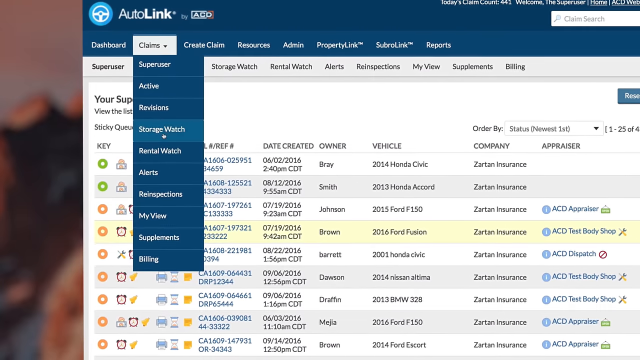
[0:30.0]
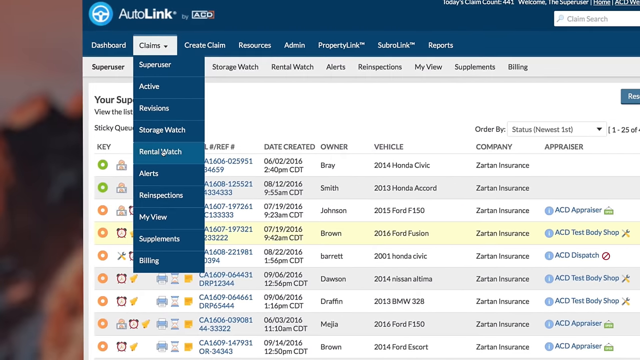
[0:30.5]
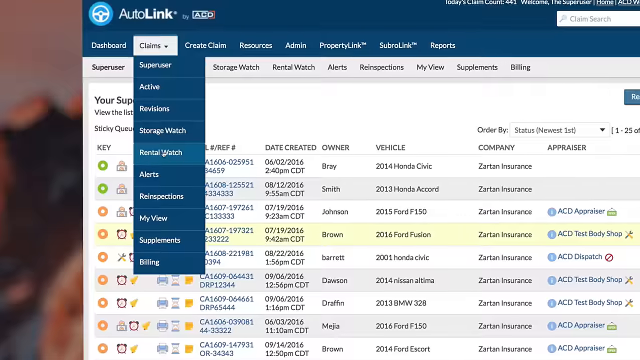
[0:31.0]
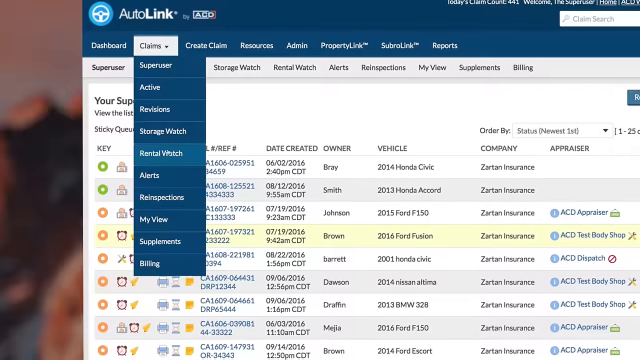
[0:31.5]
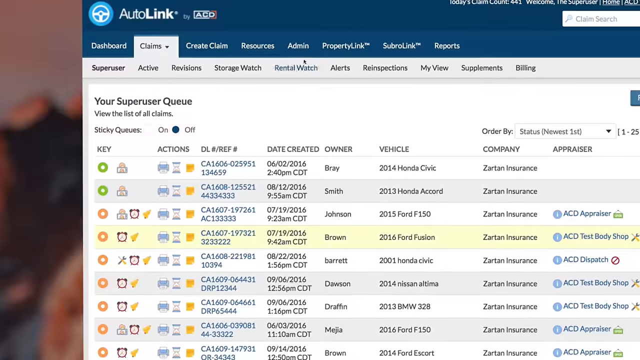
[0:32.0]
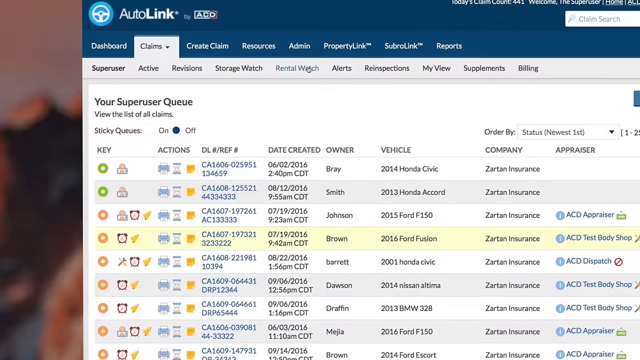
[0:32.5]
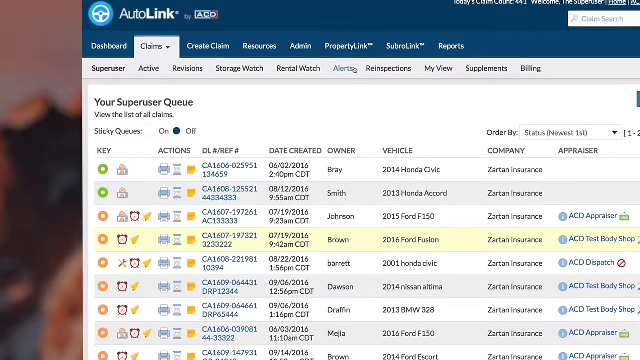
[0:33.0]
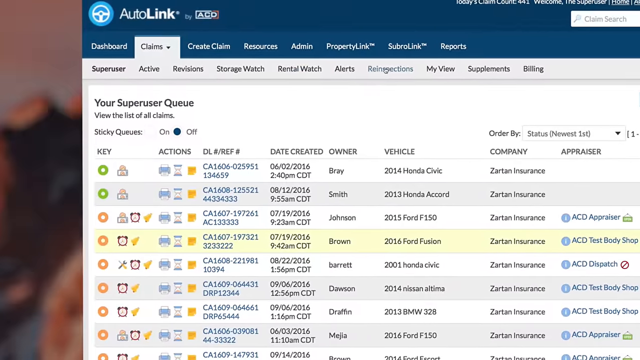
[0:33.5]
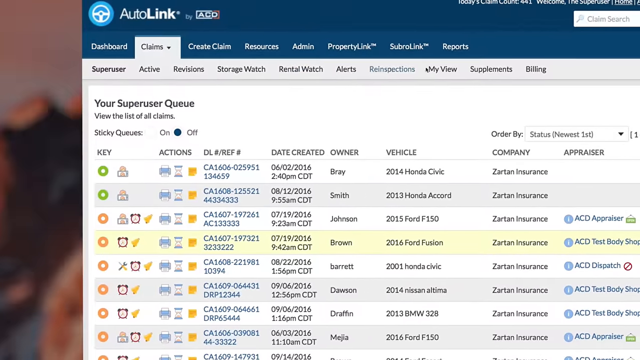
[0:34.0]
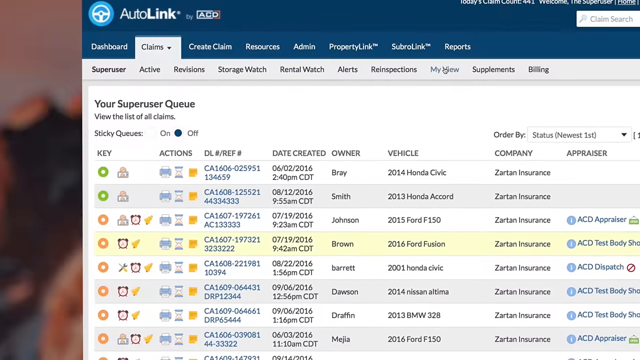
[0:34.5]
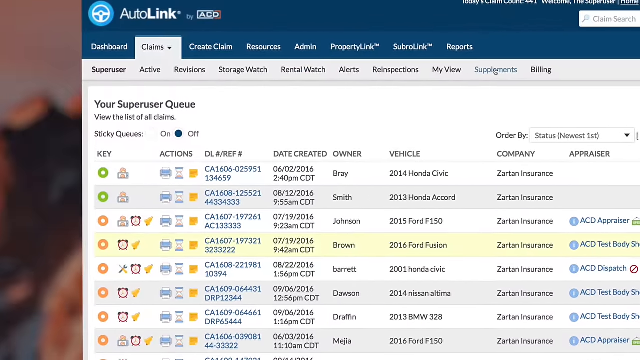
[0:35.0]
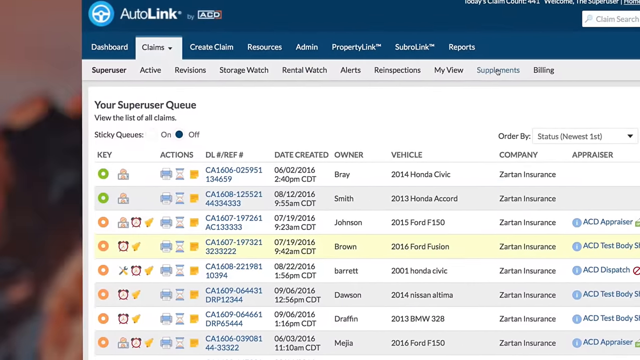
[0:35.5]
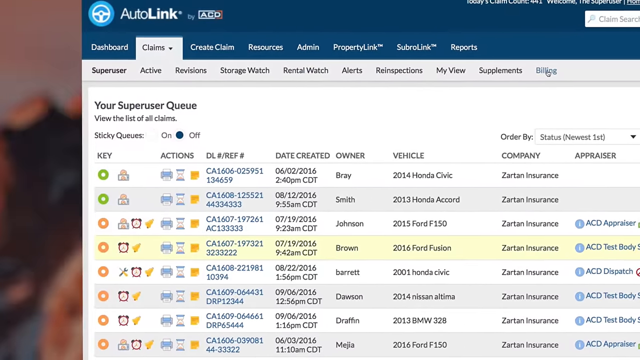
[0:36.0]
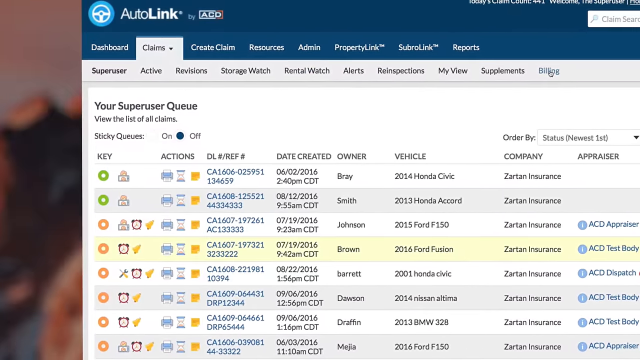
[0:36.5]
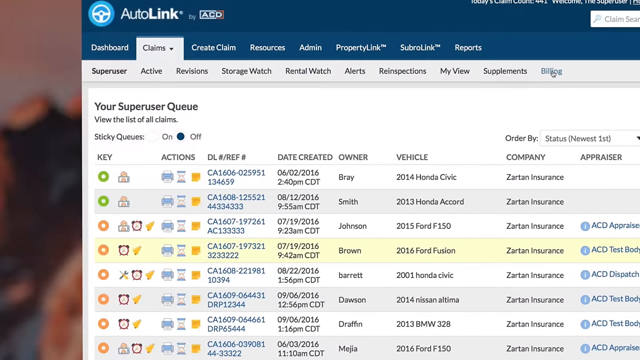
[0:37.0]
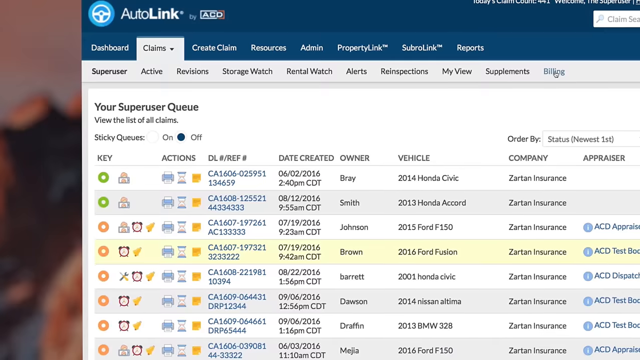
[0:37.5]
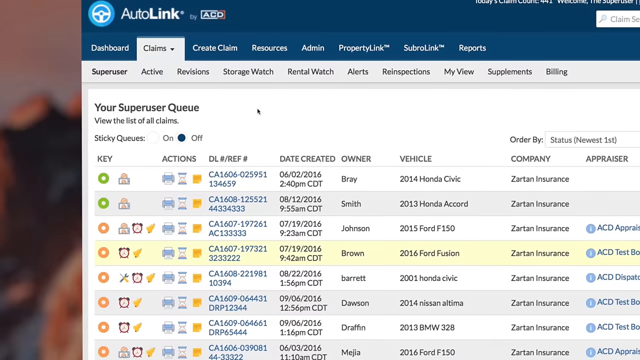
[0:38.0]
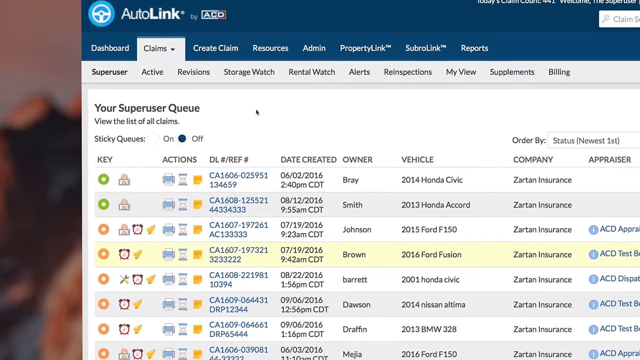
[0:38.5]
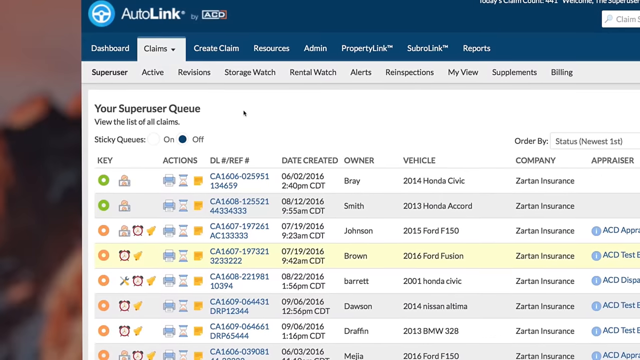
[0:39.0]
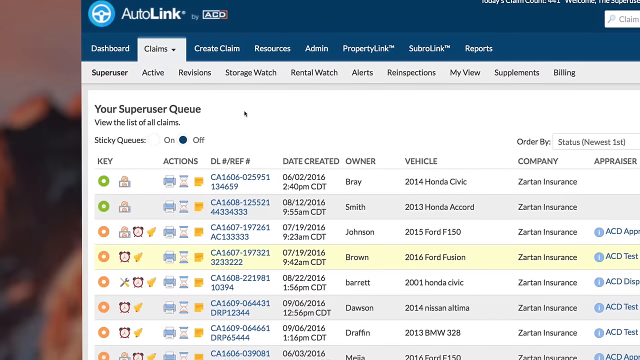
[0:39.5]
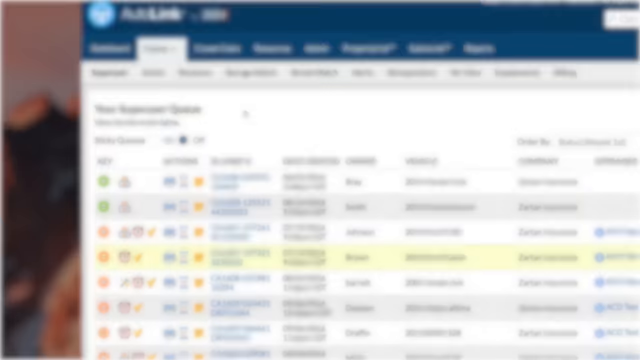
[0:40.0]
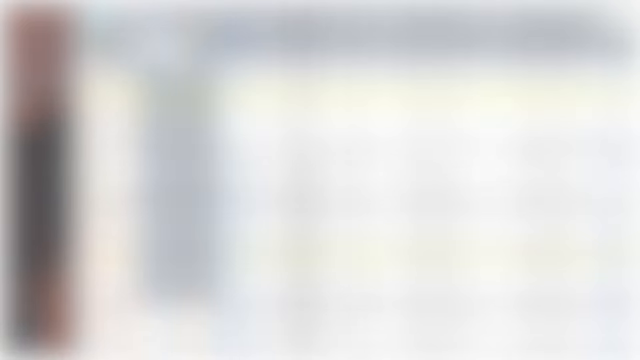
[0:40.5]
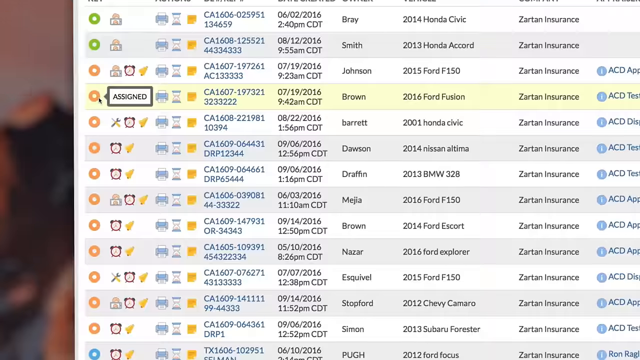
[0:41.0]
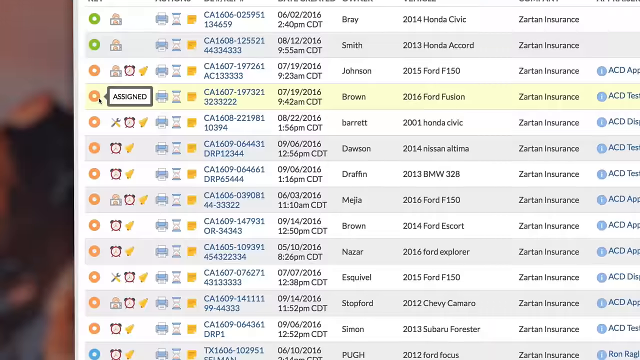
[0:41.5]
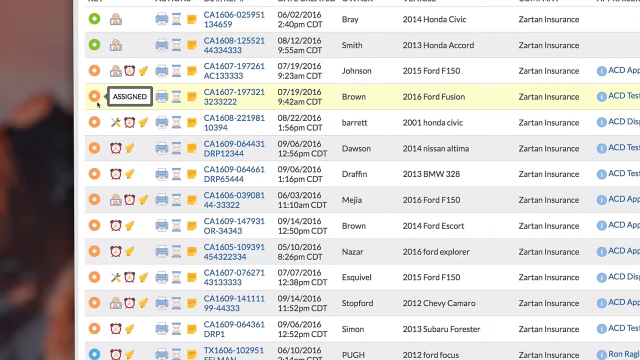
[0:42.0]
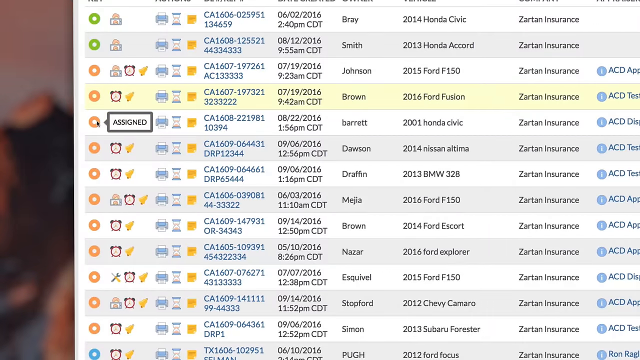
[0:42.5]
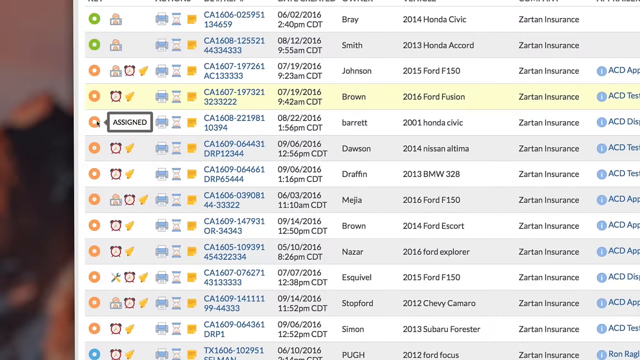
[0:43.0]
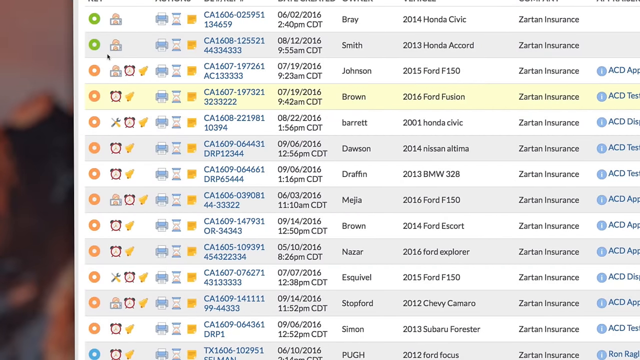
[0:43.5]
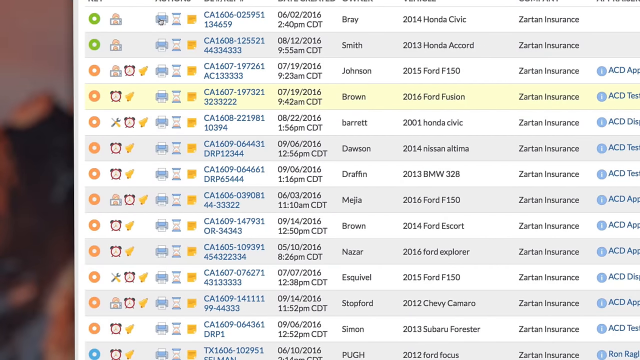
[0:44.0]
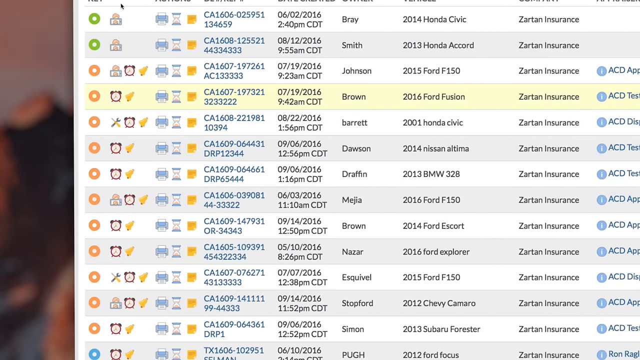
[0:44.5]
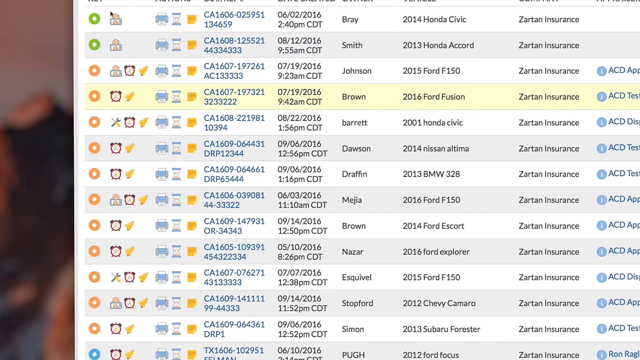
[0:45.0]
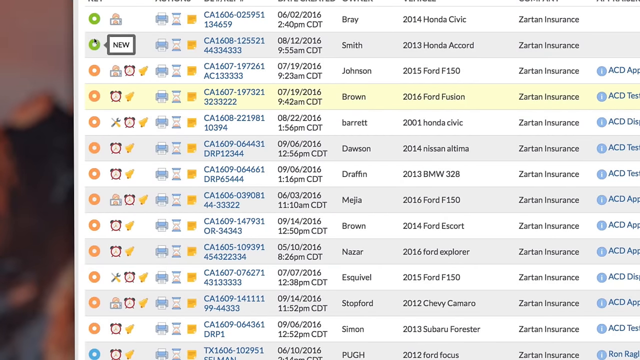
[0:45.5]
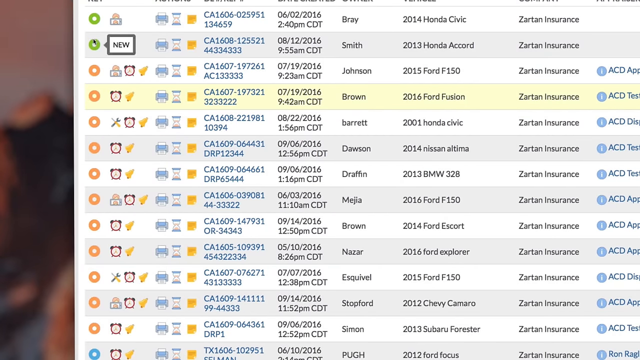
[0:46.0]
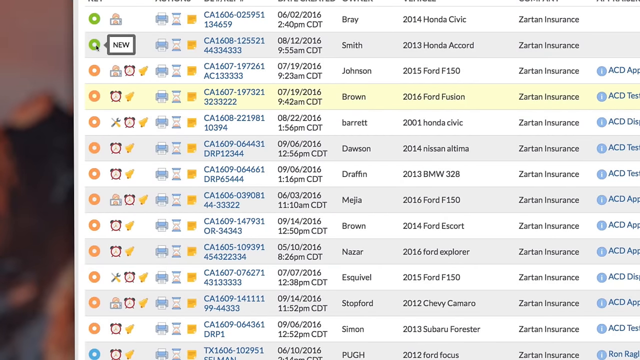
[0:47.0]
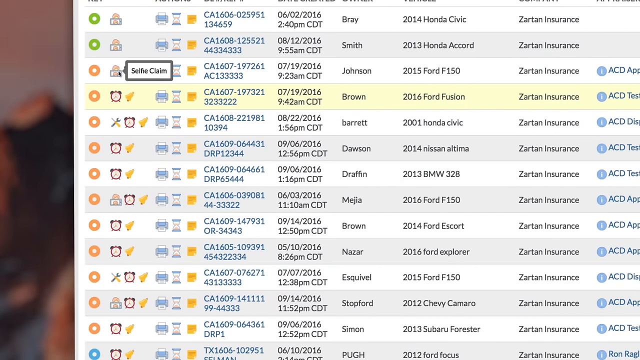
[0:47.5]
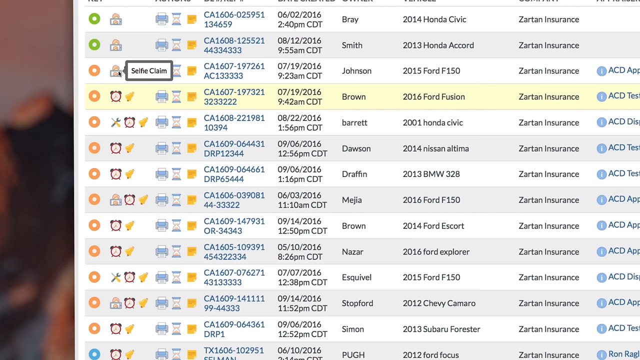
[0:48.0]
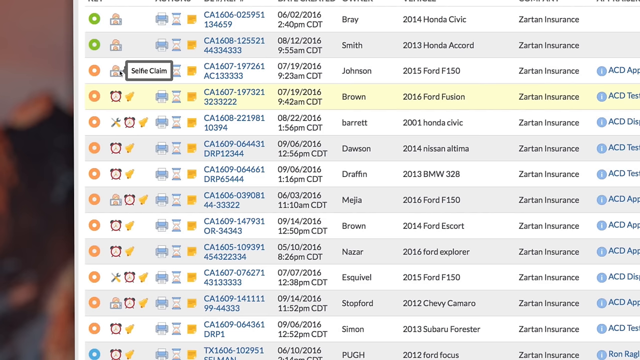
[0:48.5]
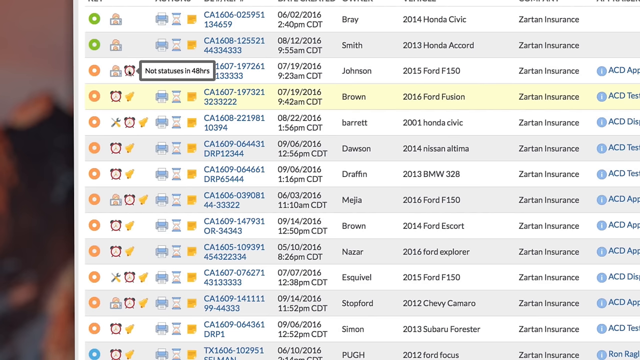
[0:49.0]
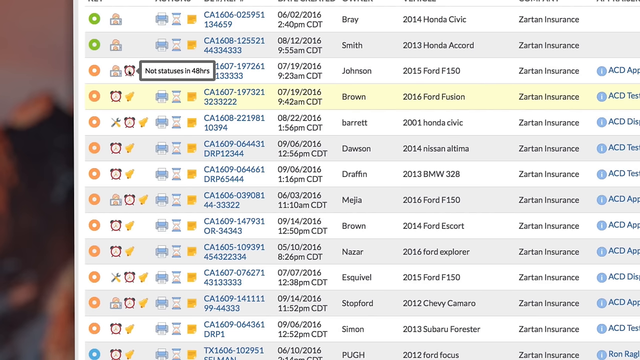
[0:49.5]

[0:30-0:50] The cursor clicks and another menu item opens up. A submenu opens with super user, active, revisions, storage watch, rental watch, alerts, re-inspections, my view, supplements, and billing. The cursor, in the shape of a hand, hovers over the words rental watch. It then goes towards Rental Watch on the submenu and on the top bar, and then highlights alerts, re-inspections, my view, supplements, and billing. Meanwhile, the view slowly zooms in towards the top left of the open browser window. "Your super user queue" and "view the list of all claims" are visible, and sticky queues has been selected as on. Beneath that is a table with columns for key, actions, deal number/ref number, date created, owner, vehicle, company, and appraiser. The row for Brown's 2016 Ford Fusion, the fourth one down, insured by Sartan Insurance, is highlighted. The mouse then highlights an orange circle marked "ASSIGNED" and a green circle marked "NEW". Then the menu item for selfie claim appears, and next to that an alarm clock icon with a label about status in 48 hours.